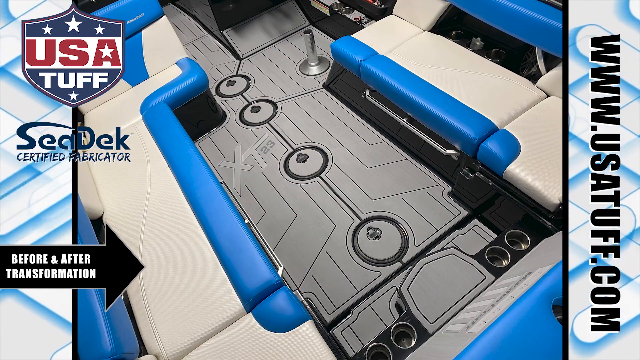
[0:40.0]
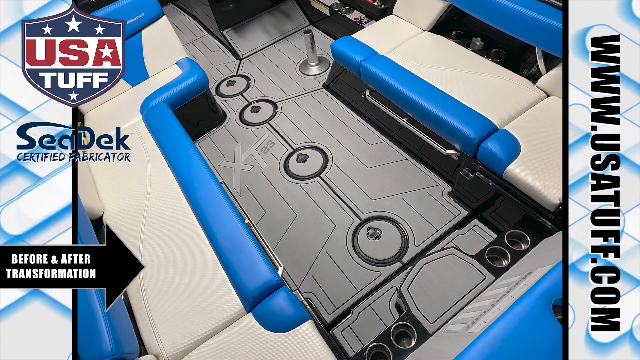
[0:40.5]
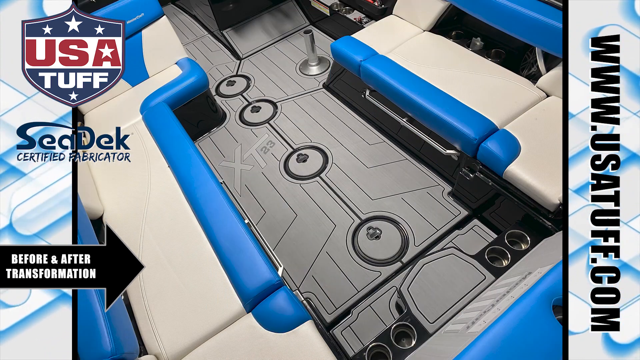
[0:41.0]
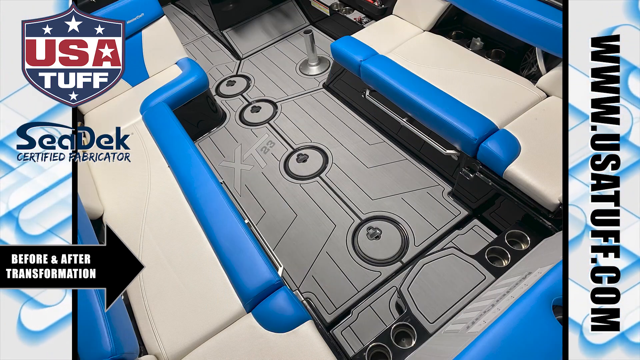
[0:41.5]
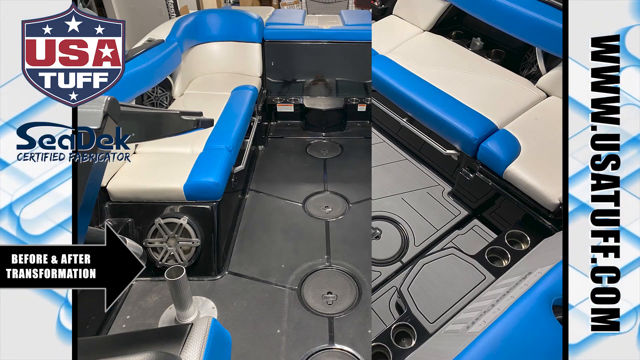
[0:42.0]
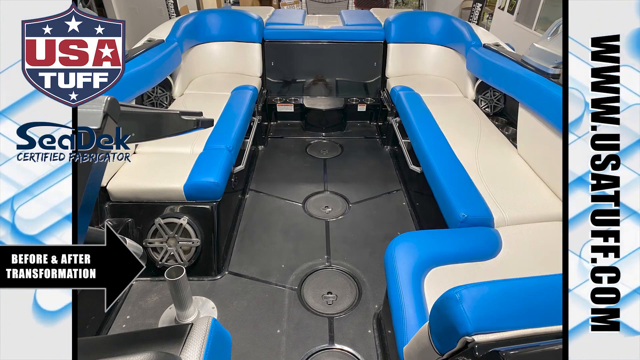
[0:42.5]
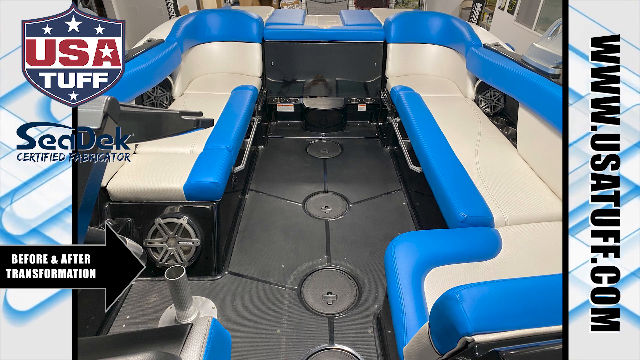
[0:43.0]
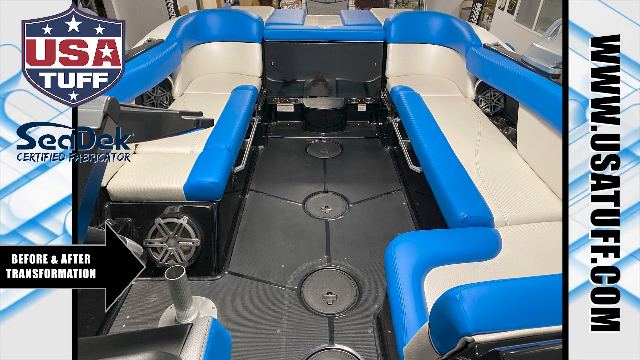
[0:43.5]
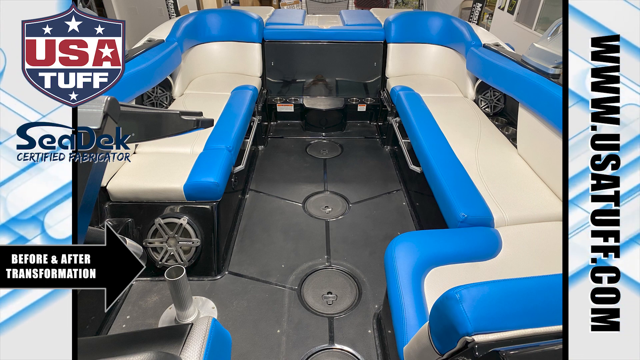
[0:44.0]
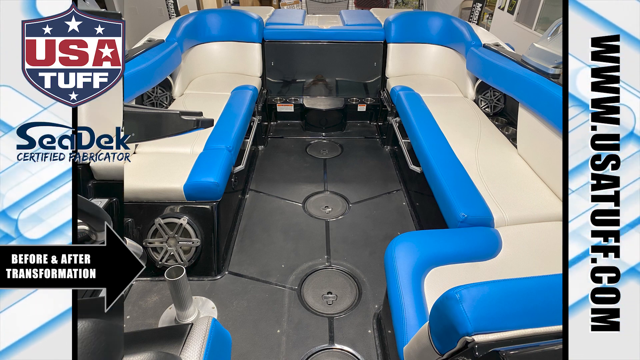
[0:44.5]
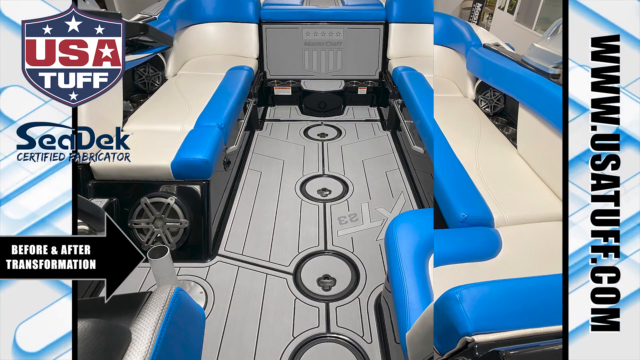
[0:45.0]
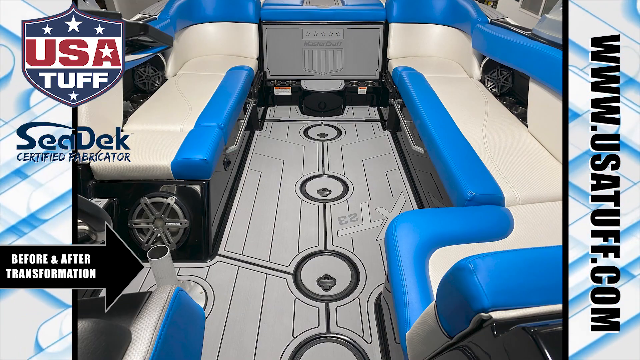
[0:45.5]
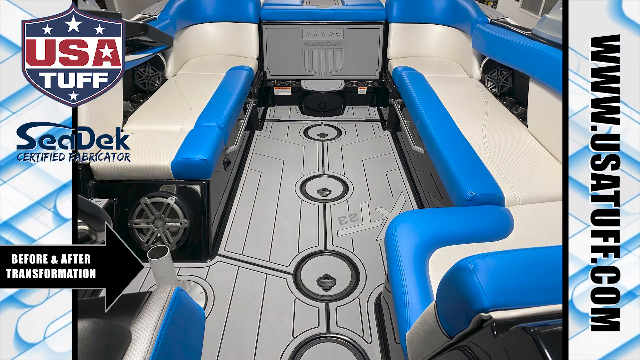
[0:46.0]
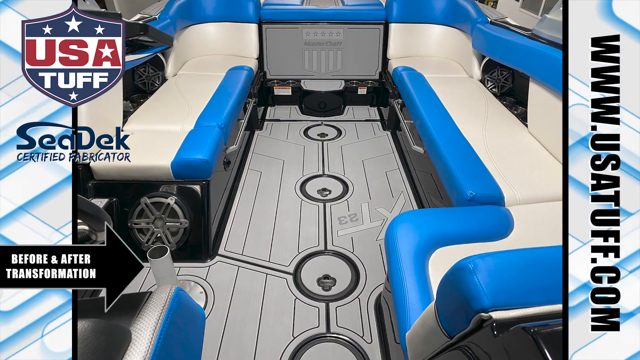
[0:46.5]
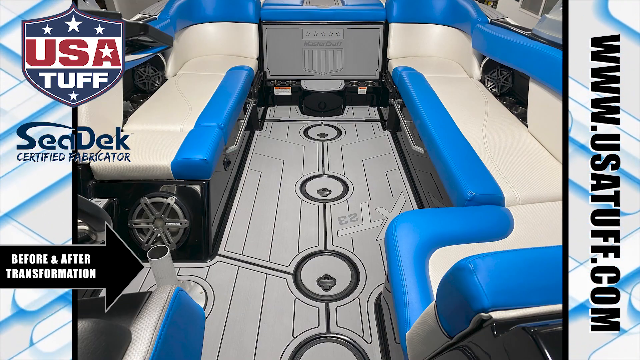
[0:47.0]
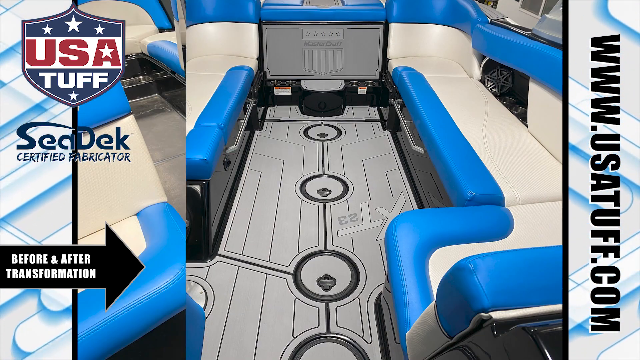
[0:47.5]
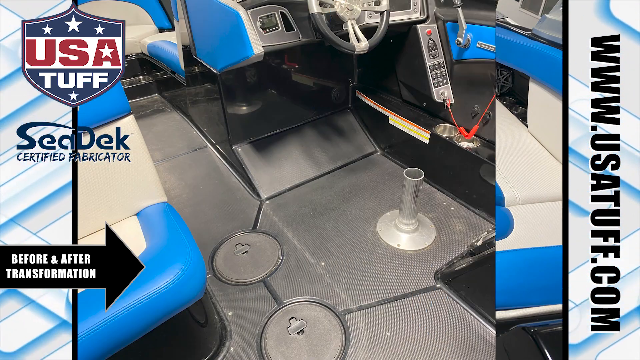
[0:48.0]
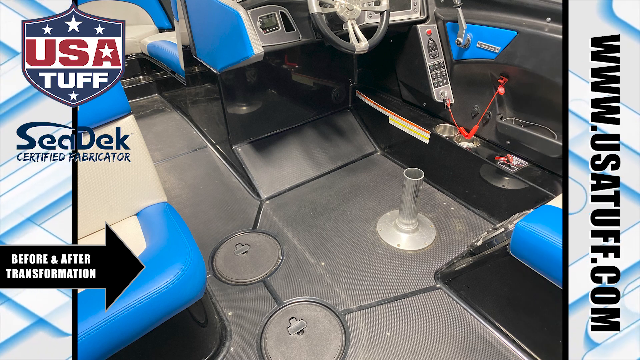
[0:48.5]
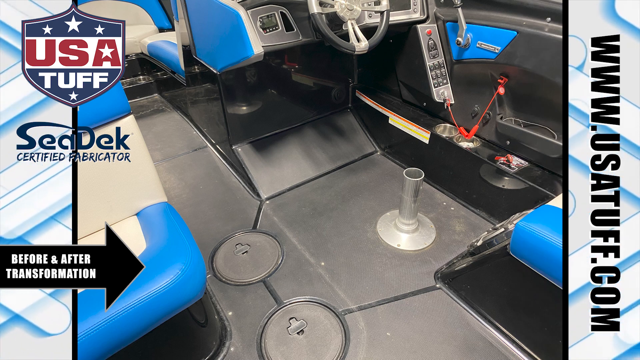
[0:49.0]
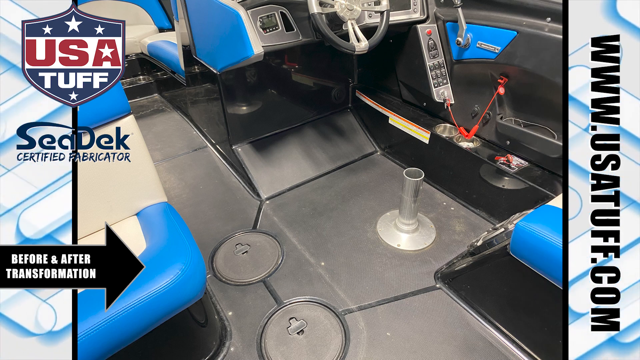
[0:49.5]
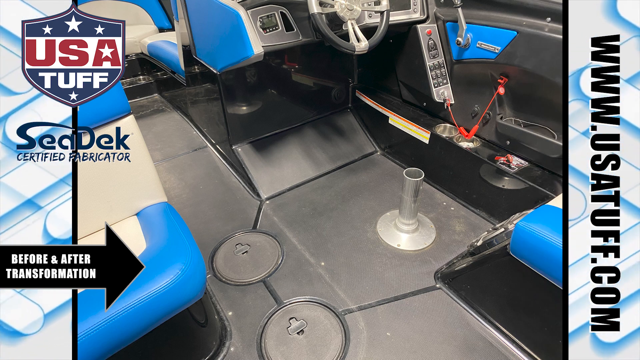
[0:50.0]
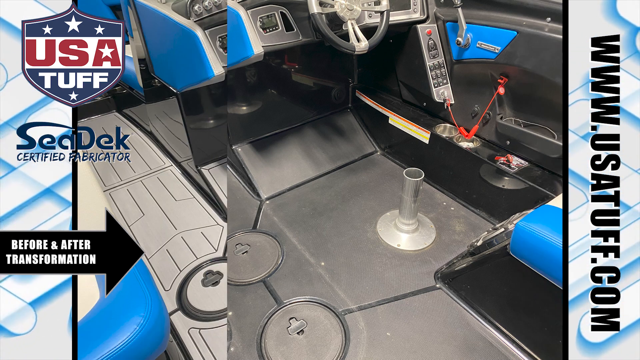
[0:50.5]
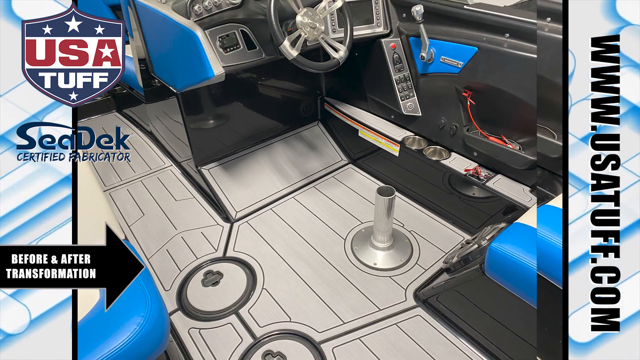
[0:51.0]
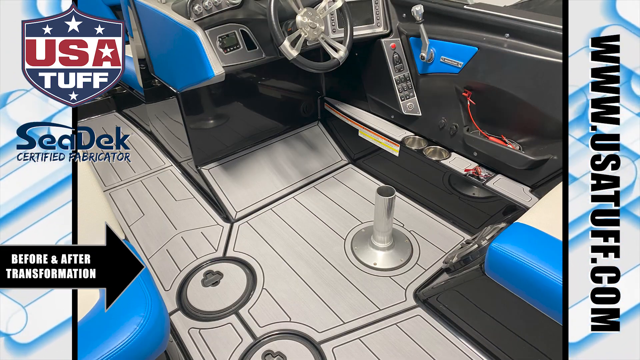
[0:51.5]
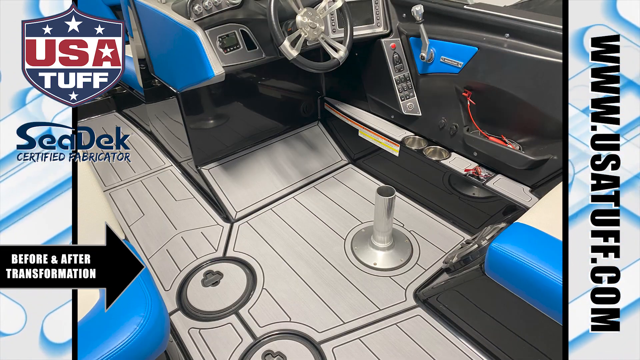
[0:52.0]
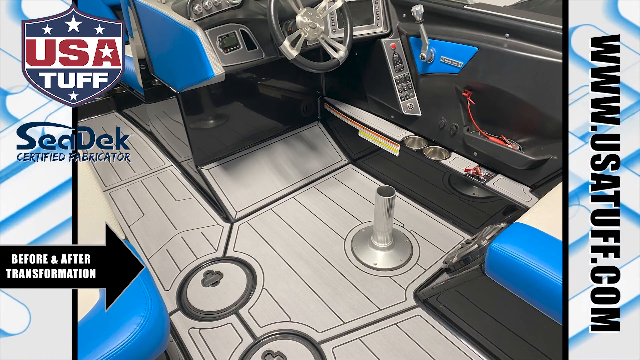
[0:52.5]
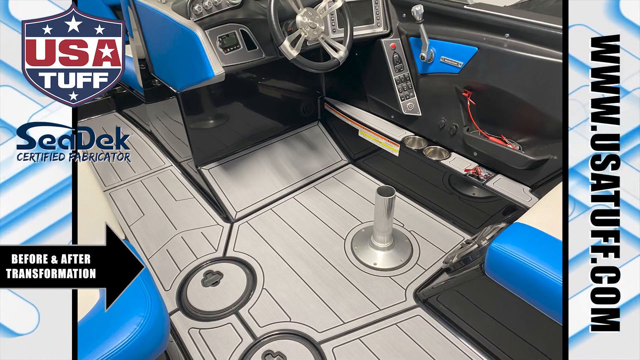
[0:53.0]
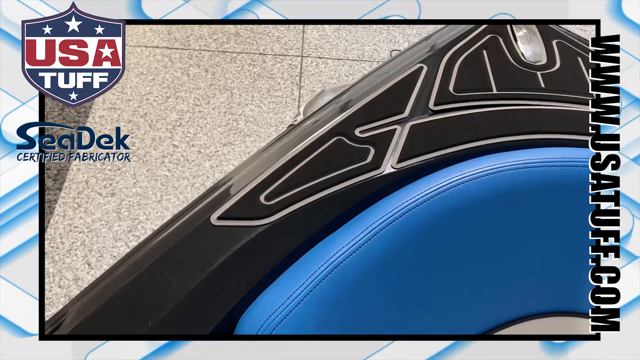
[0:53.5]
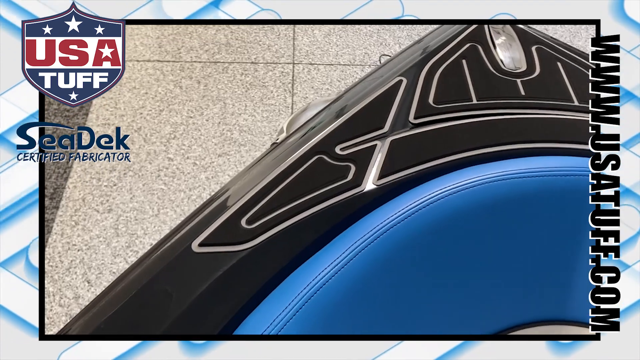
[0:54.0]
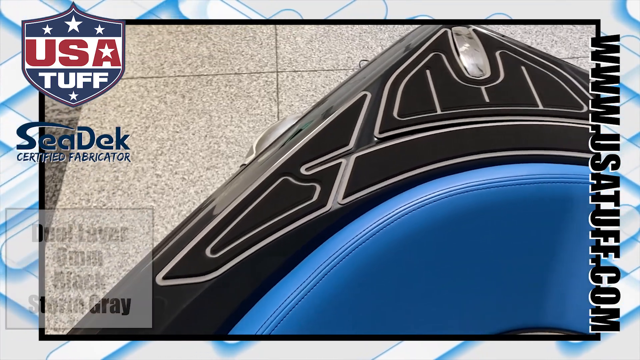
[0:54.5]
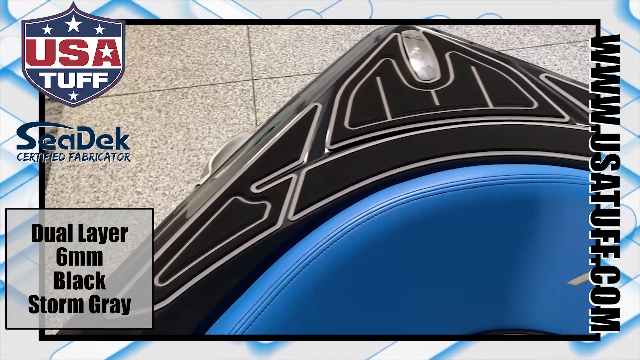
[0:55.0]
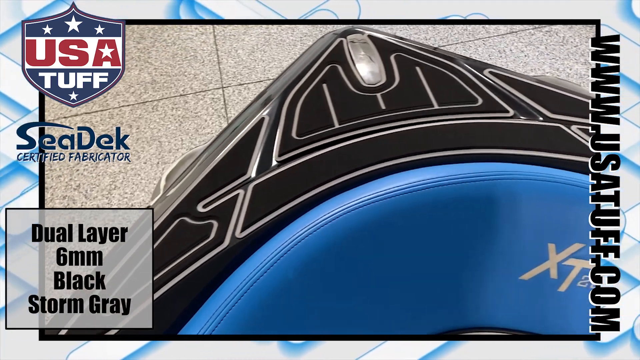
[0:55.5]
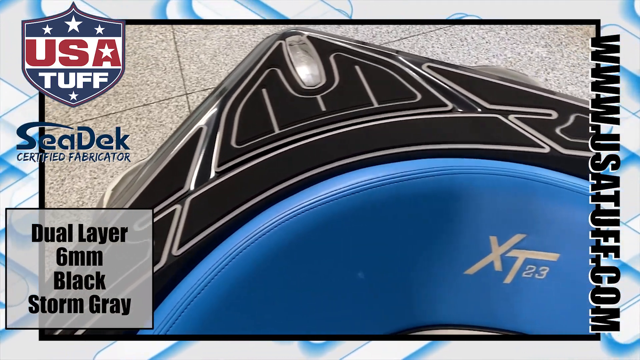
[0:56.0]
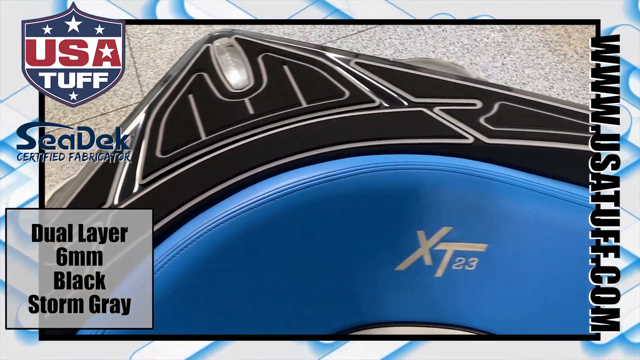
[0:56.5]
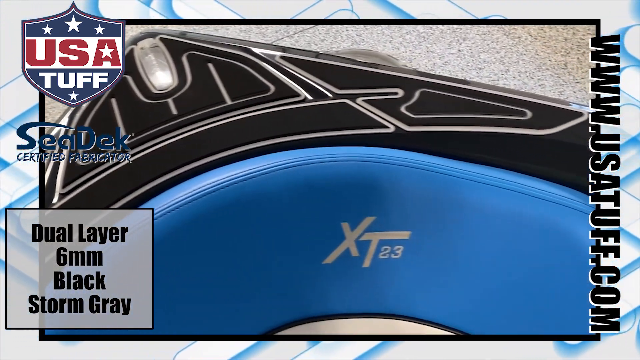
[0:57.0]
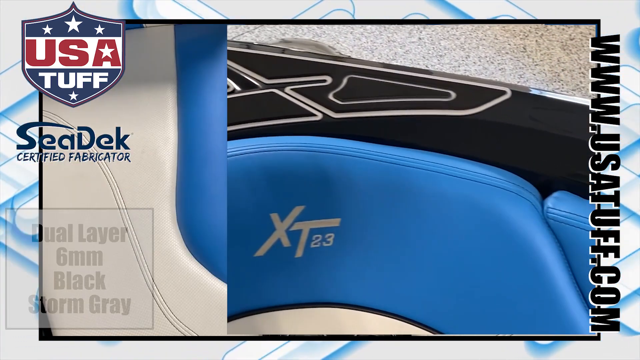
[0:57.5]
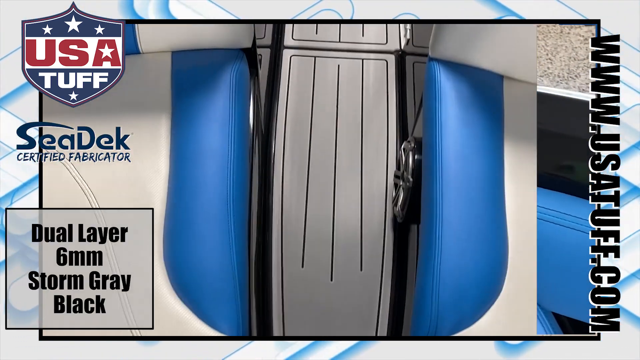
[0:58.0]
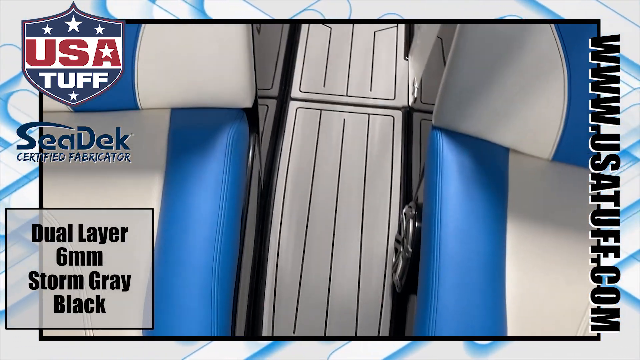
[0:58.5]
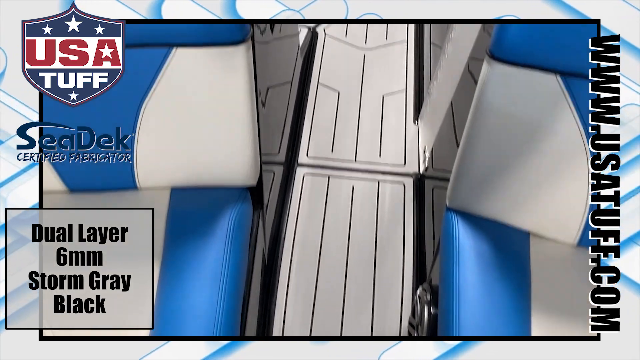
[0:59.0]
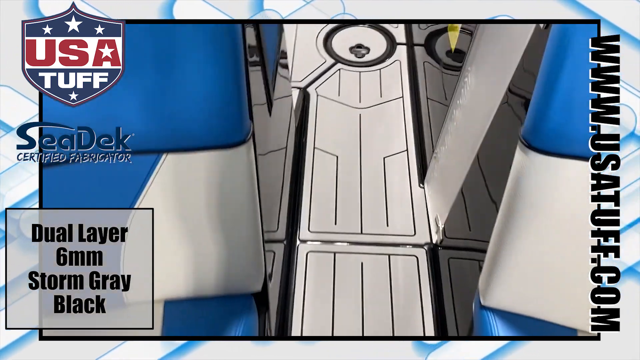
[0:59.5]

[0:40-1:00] The before-and-after comparison continues, with the black arrow pointing to areas of the boat and bouncing up and down, apparently to show how they changed. The black arrow has white text reading "before & after" with "transformation" underneath. The USA TUFF emblem or shield is still there, along with "CDEK" and "certified fabricator" in blue. The arrow points to the seats, which are blue and white, then to a pipe, which changed from black to silver, then it looks like it points at the circles, one of which changed as well. Text reads "dual layer 6mm black storm gray" and "dual layer 6mm storm gray black", appearing twice.